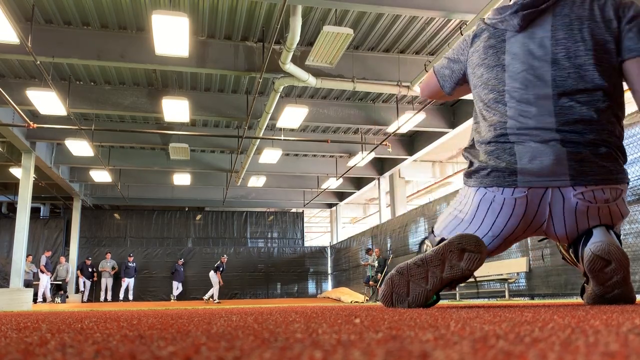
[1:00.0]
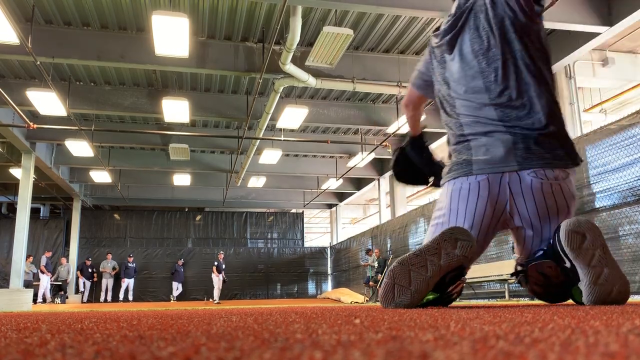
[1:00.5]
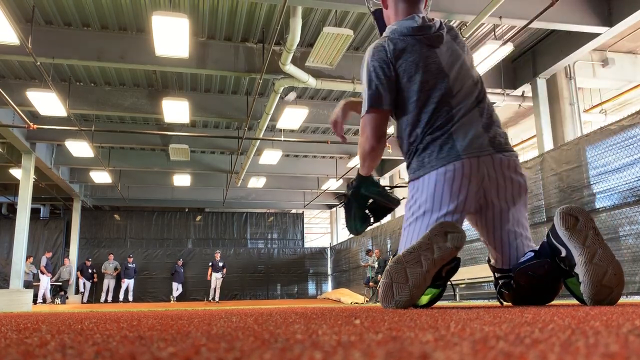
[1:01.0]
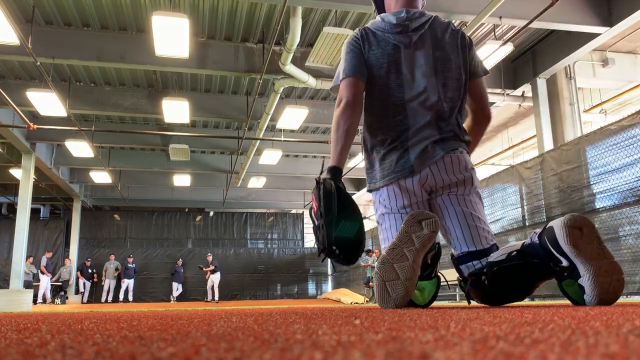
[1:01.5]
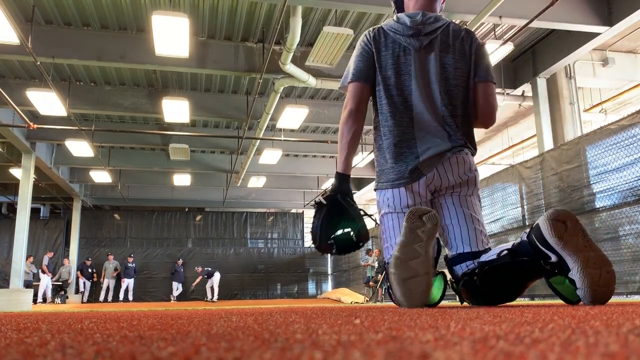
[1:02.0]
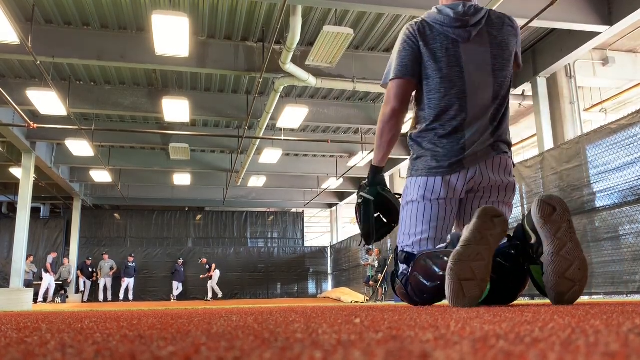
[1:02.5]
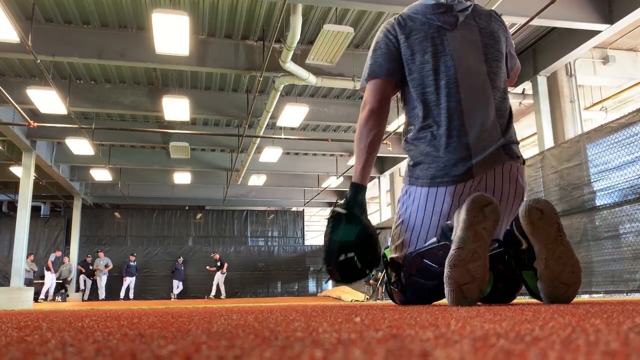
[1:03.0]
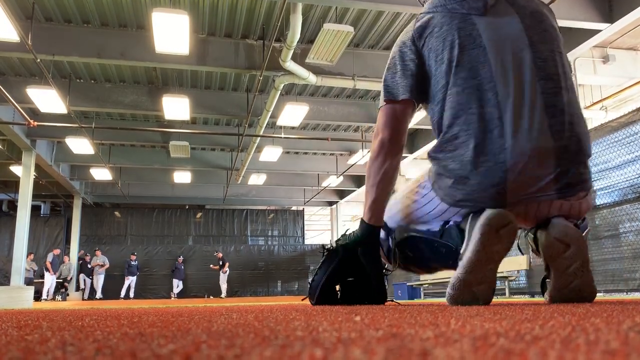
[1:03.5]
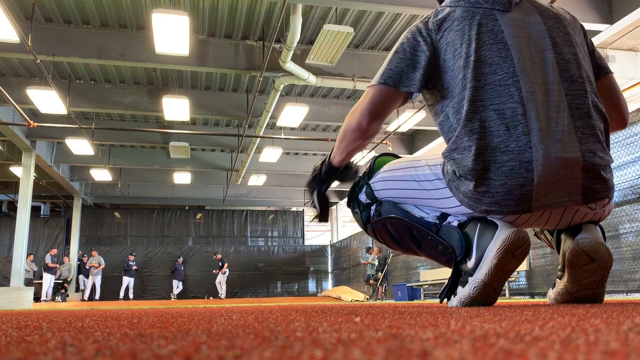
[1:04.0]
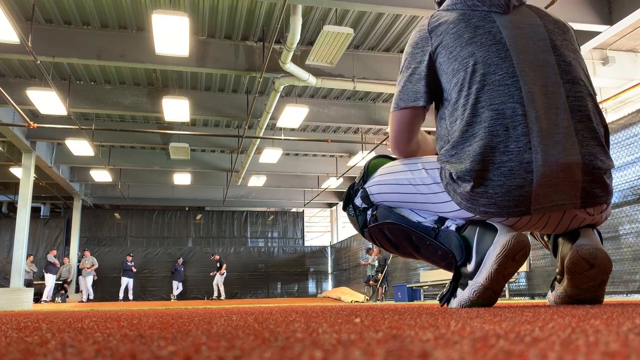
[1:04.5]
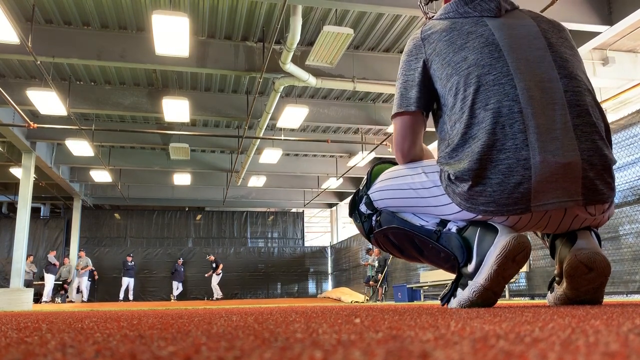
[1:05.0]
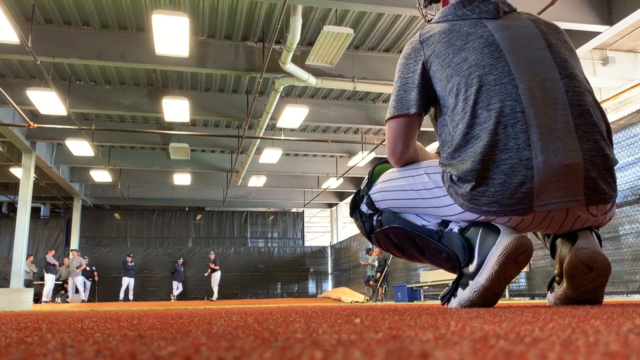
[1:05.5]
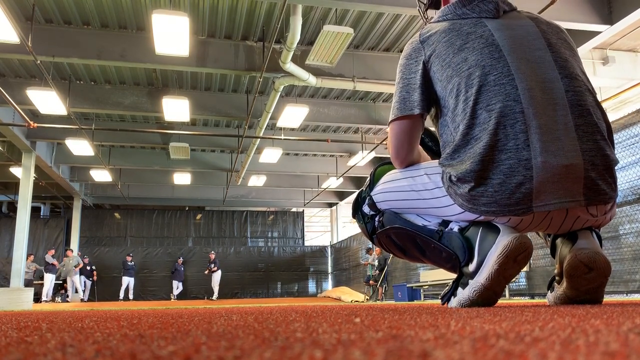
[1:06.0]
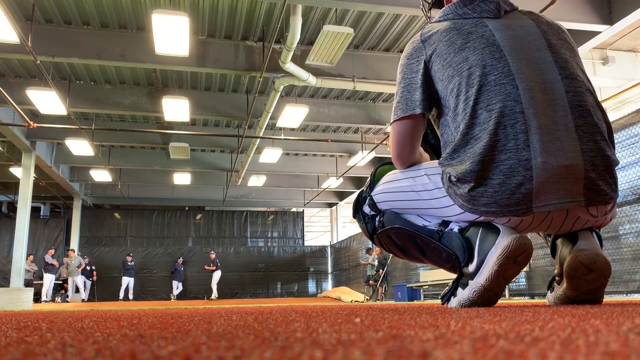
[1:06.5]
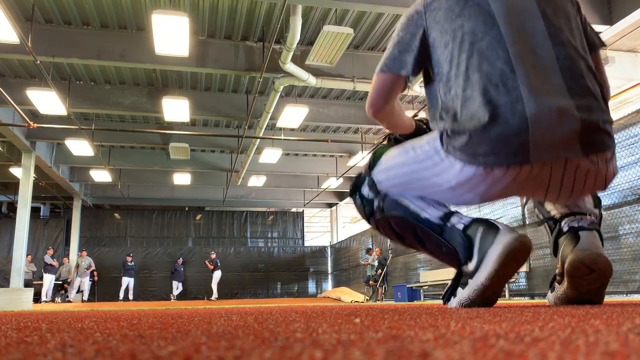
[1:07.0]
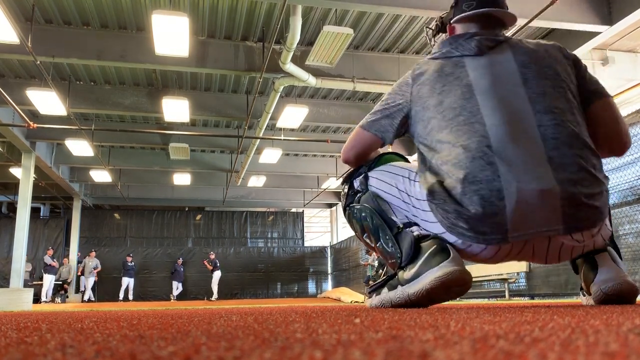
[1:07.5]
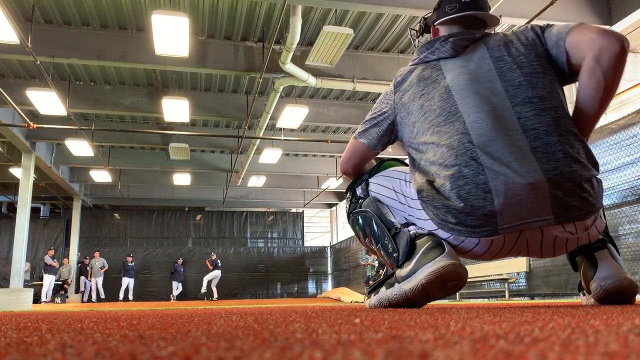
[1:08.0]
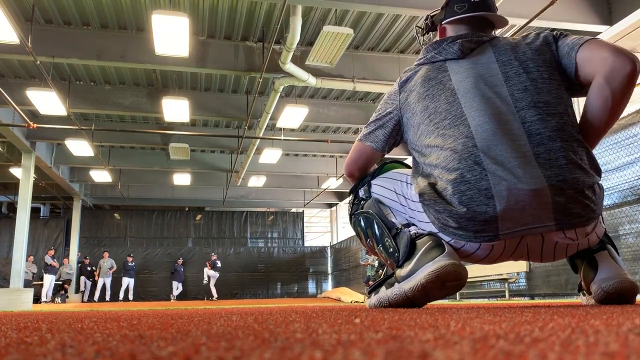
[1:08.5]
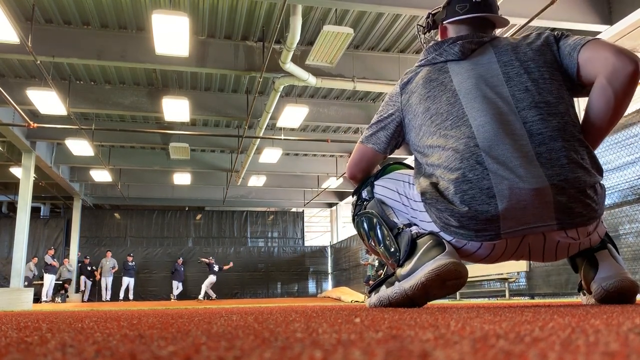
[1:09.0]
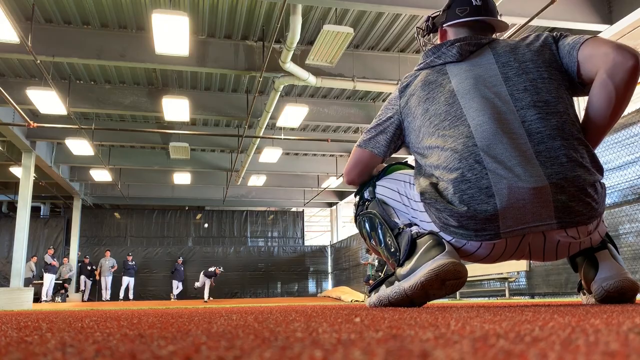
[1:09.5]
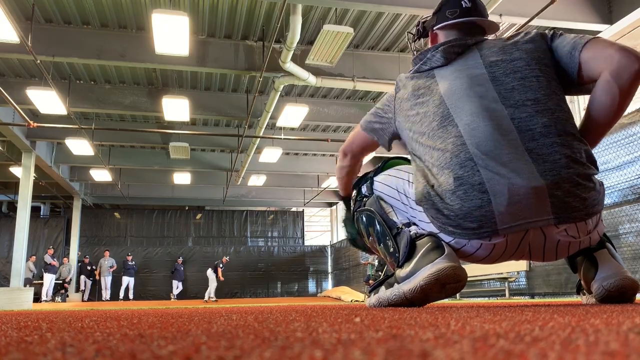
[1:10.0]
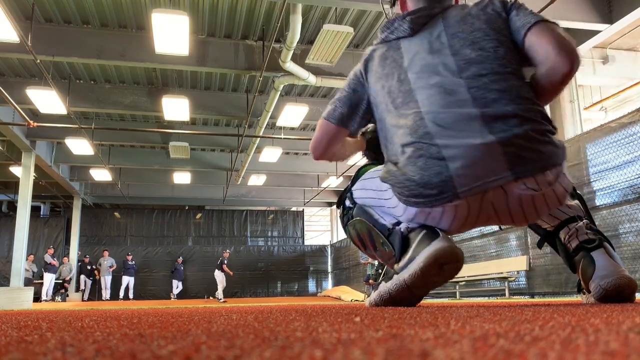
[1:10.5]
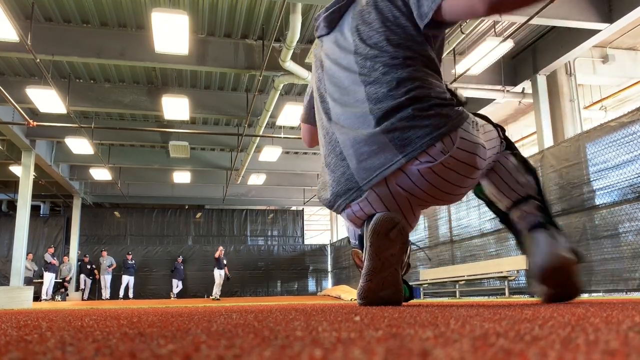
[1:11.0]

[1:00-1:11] The pitcher throws the last pitch to the catcher. It looks like a perfect delivery: the ball does not hit the ground, and the catcher receives it. All the people standing around observe the catcher and pitcher throwing the ball back and forth. Half of the people wear black jerseys and white pants with black stripes, while the other half wear what looks like the same uniform pants with grey jerseys or t-shirts.